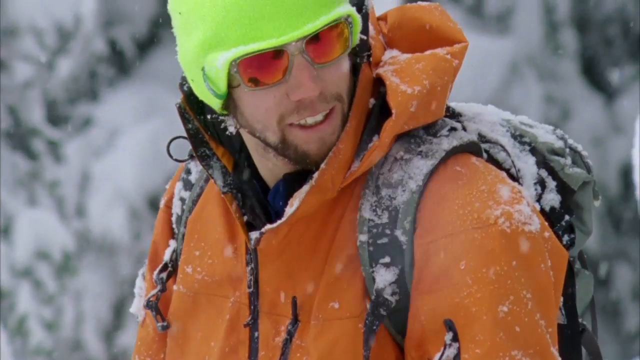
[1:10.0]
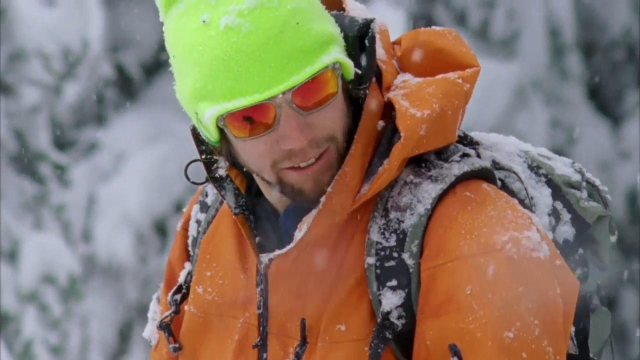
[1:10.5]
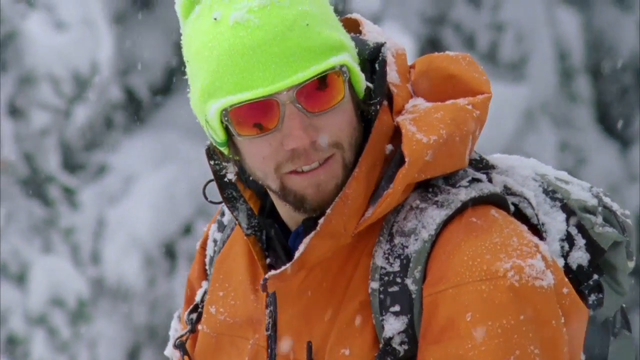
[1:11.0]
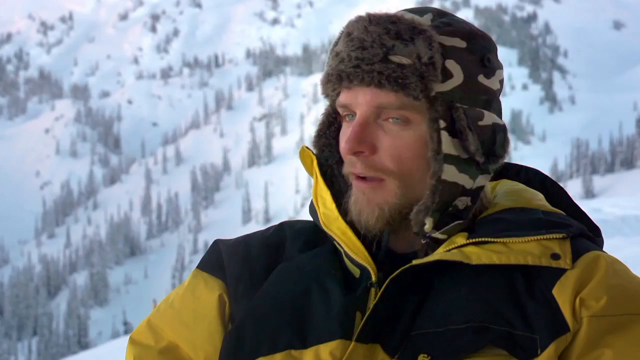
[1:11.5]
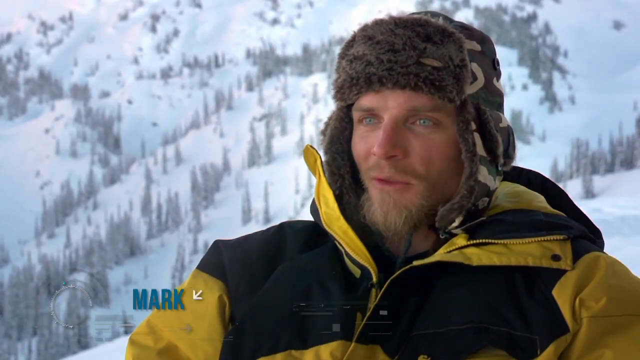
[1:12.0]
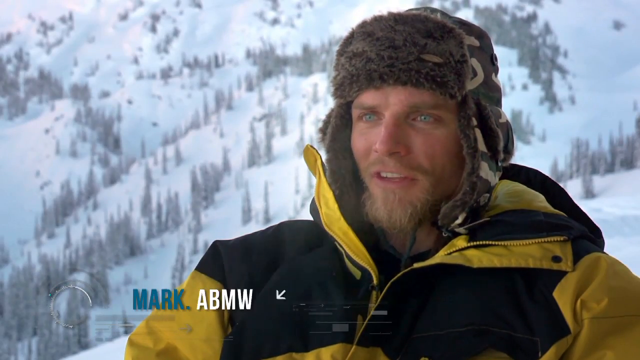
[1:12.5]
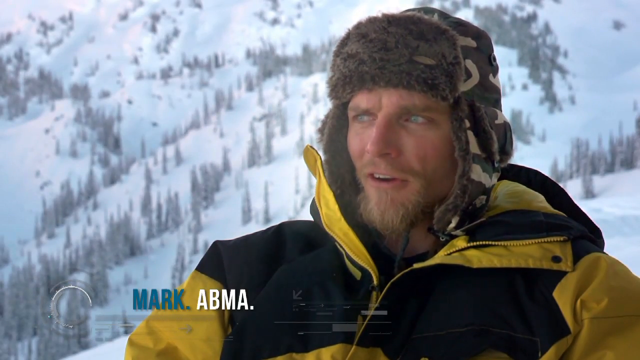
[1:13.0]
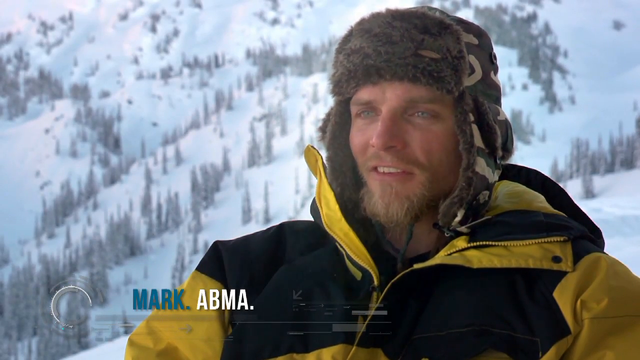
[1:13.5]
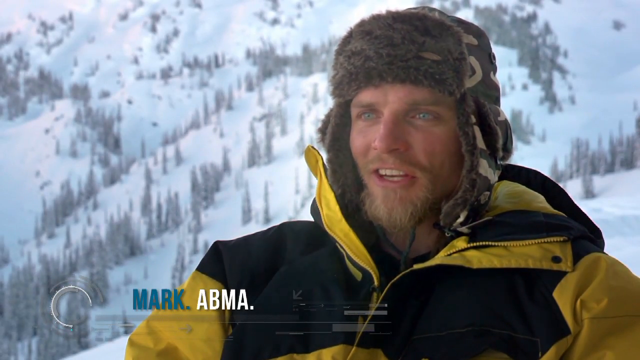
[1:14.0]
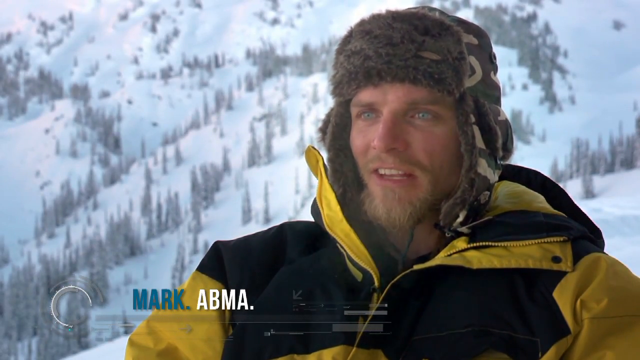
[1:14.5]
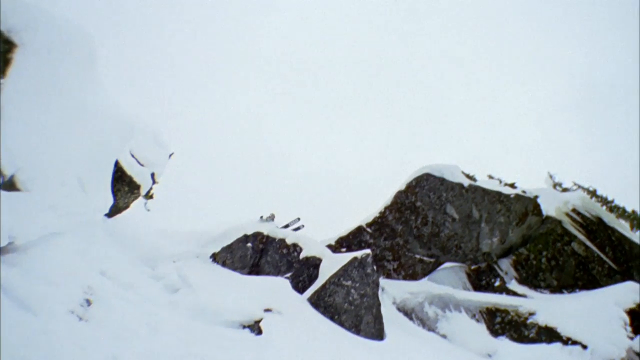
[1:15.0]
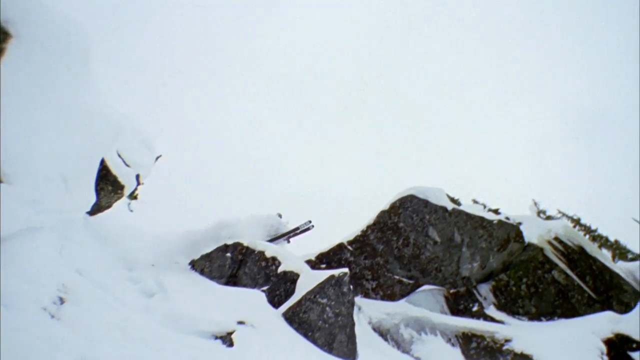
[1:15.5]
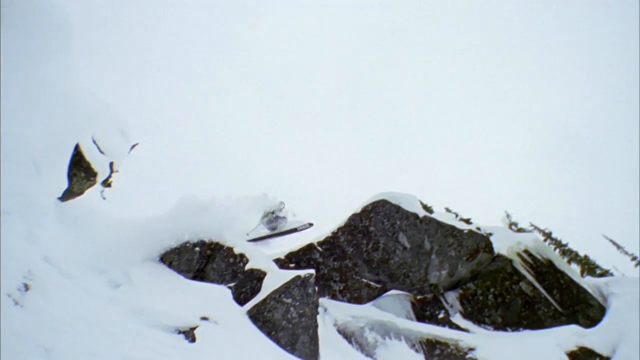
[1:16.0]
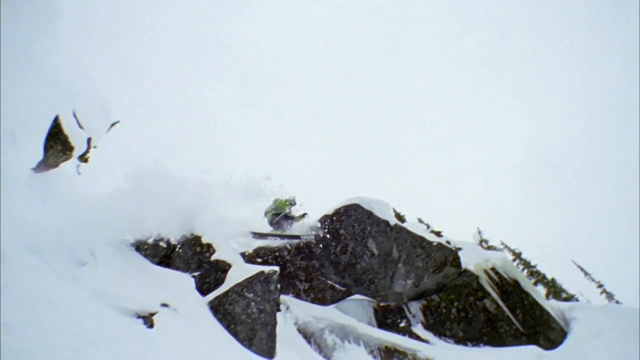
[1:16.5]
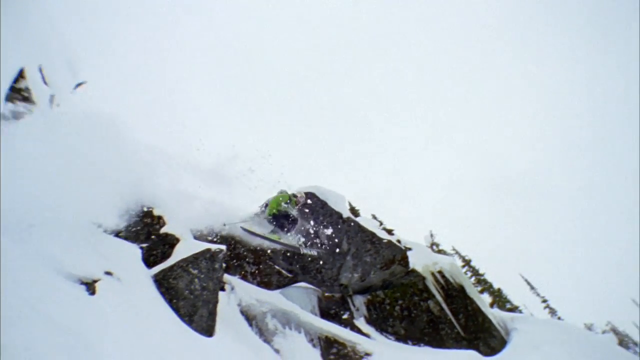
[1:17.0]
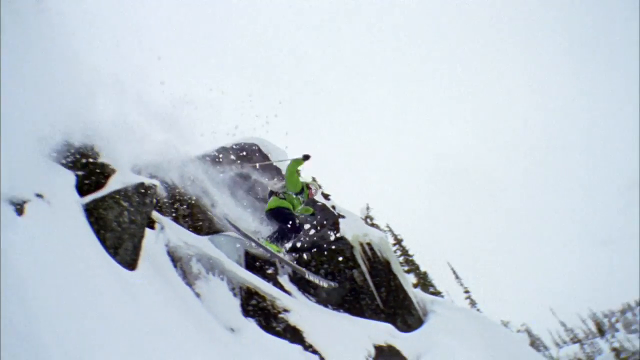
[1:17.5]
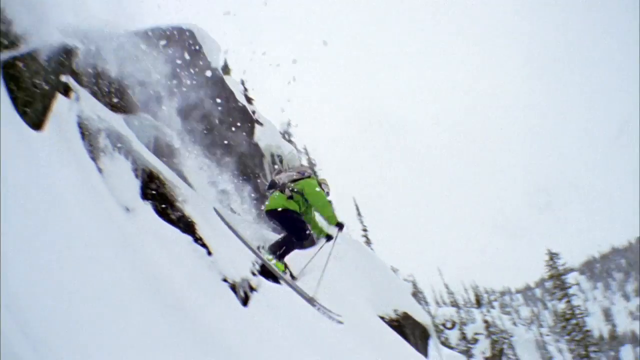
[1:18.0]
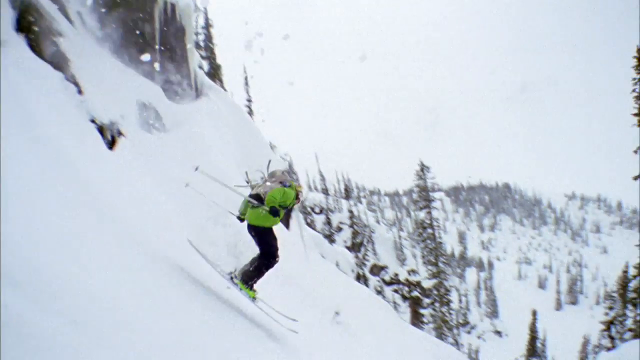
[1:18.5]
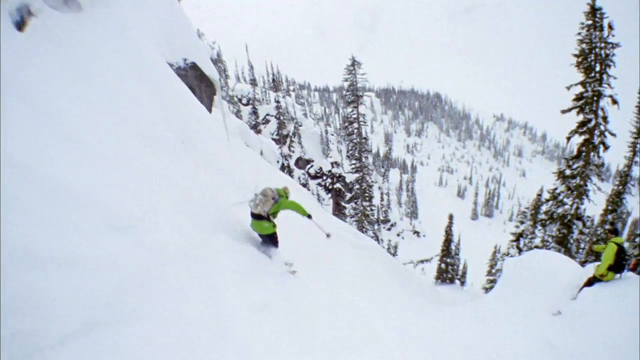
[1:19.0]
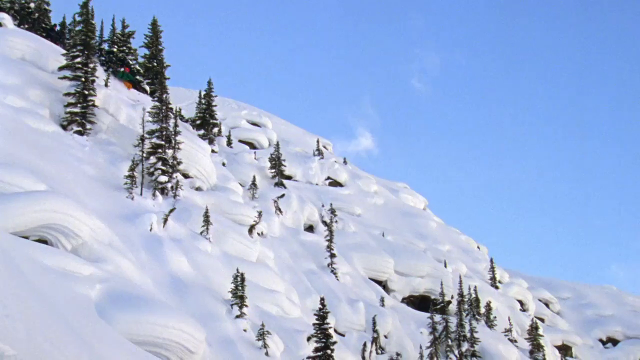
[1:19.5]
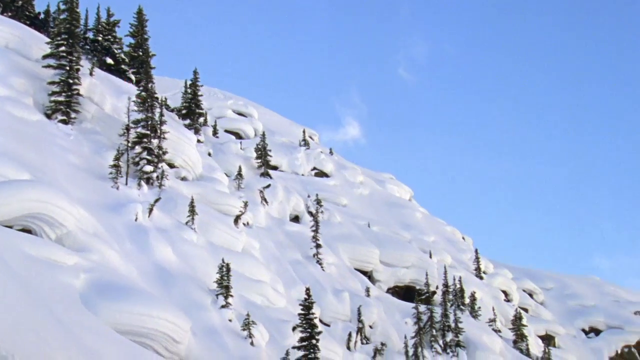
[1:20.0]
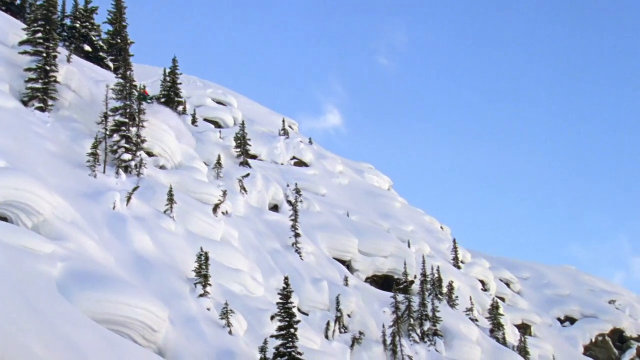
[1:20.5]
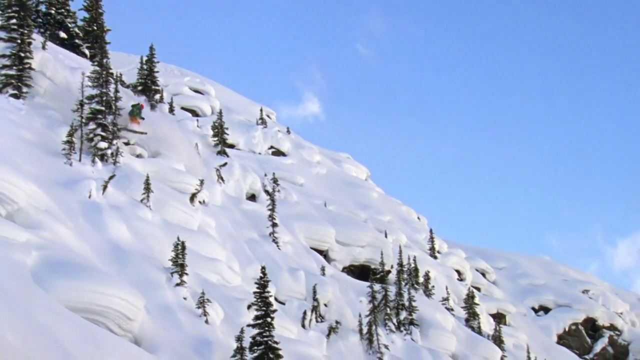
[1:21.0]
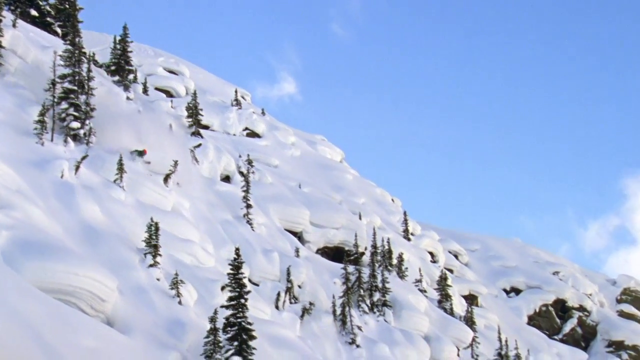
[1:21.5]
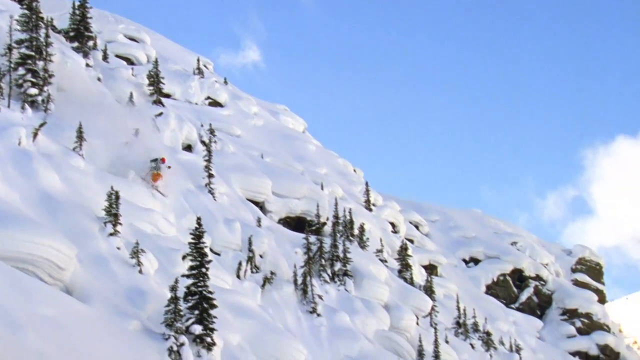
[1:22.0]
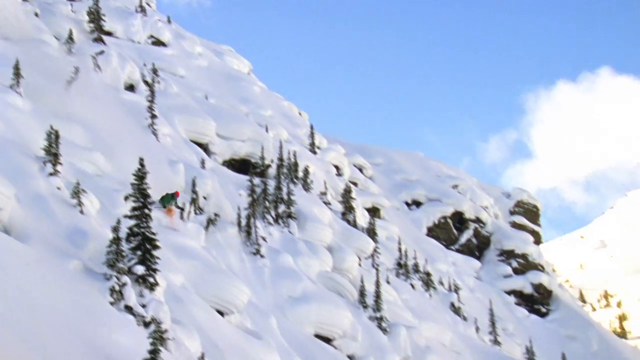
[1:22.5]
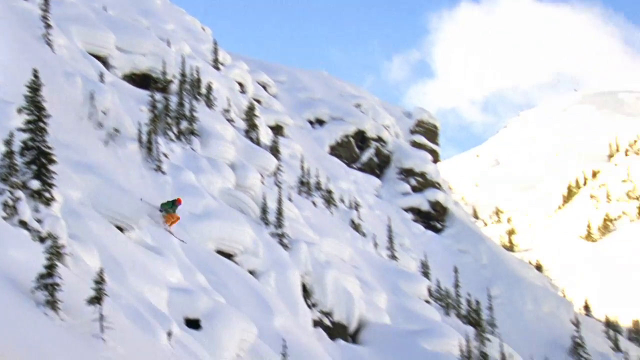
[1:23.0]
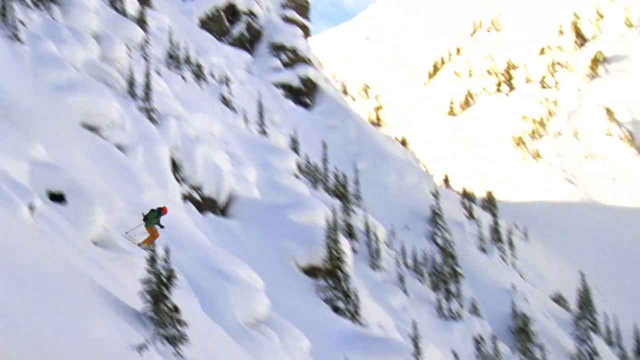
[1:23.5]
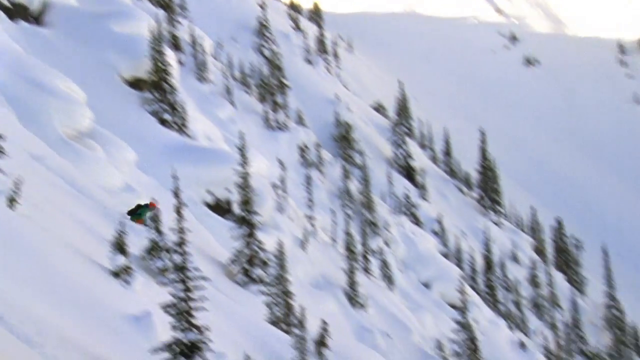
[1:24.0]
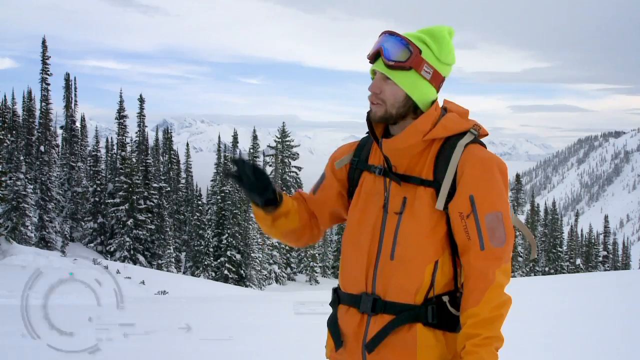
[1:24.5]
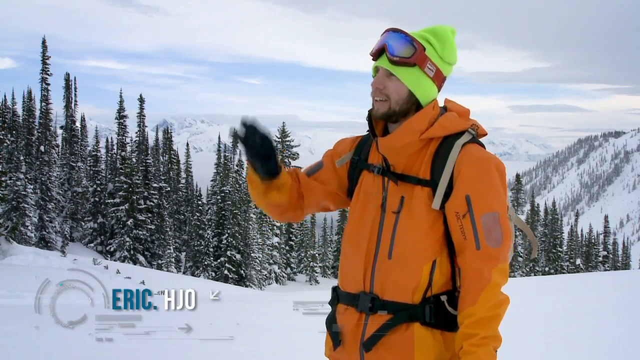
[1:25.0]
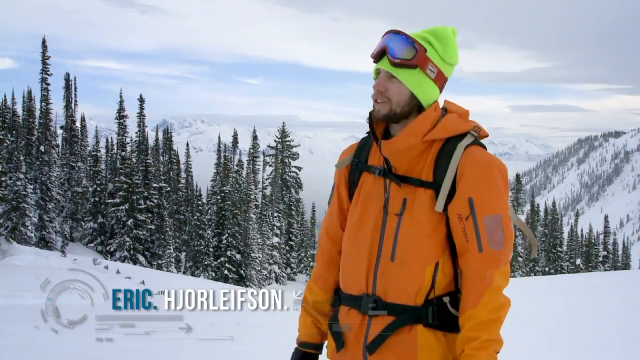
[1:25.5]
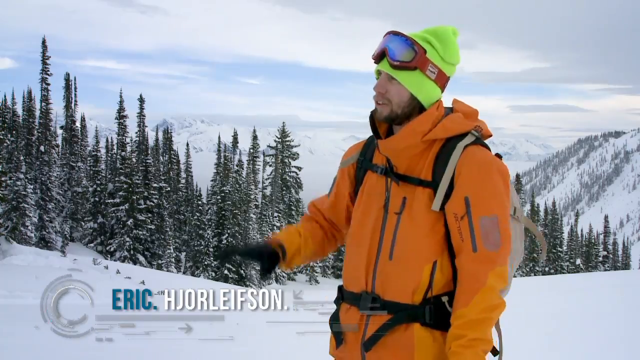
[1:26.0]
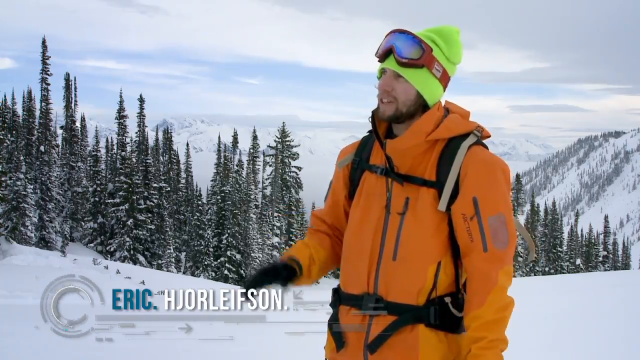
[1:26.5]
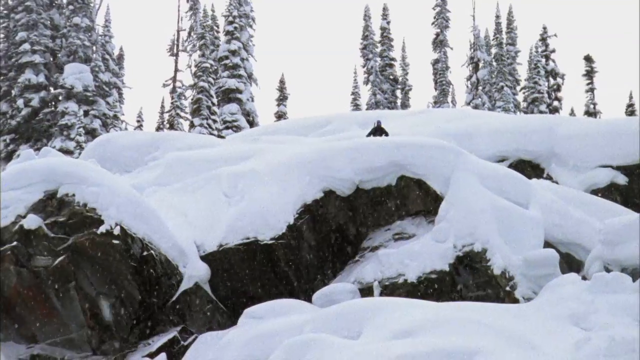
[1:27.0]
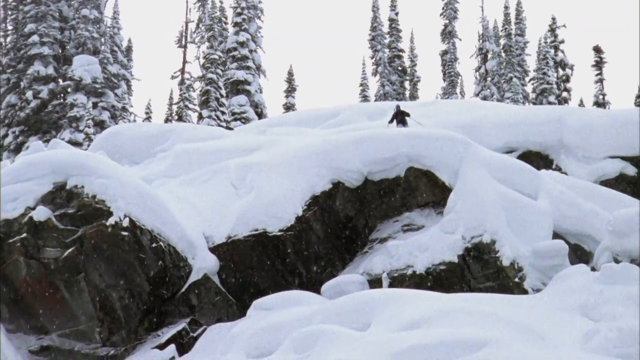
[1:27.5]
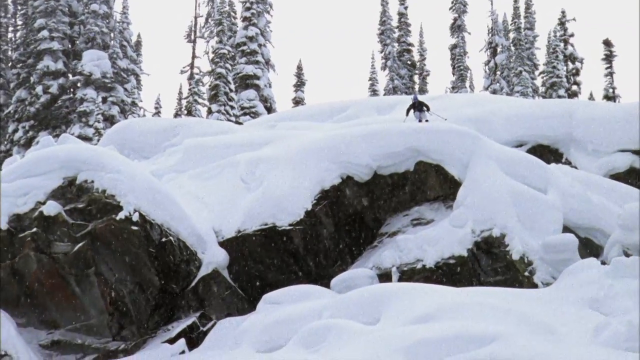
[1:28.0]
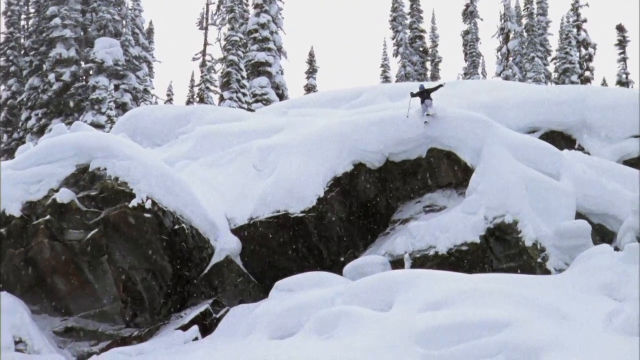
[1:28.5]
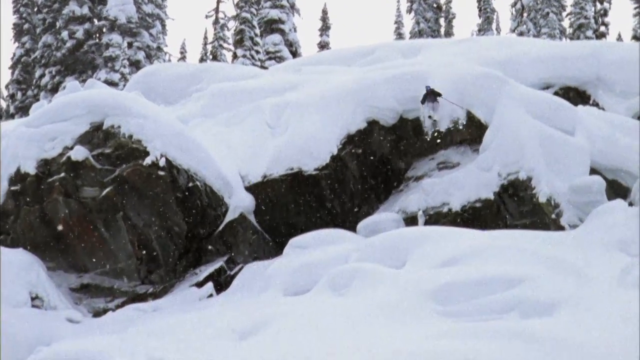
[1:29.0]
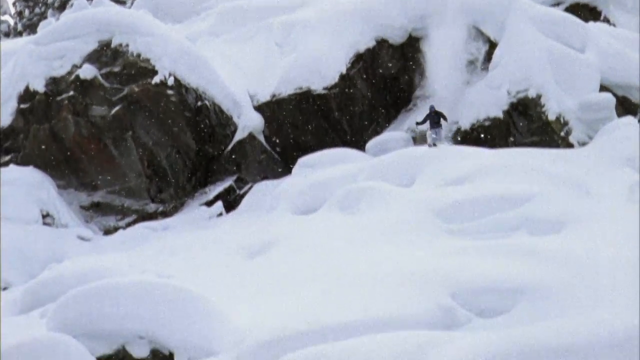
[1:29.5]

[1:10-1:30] The skier looks to his left with his mouth slightly open. The next shot shows a speaking Caucasian man who looks to be in his 30s, with a blonde beard and blue eyes, wearing a yellow and black jacket and a camouflage hat; on the screen his name is given as "Mark Abma", and he is speaking to someone. Then a skier drops down from a cliff, moving from left to right while the camera faces upward toward them, moving both arms in a circular motion as they drop. Next, another skier in red pants, a green jacket and a red beanie goes down a hill from left to right, in slow motion but a little sped up. Then the skier with the orange jacket and the neon green beanie, named Eric Adjor Lifeson, speaks with the camera a little to his left, moving his right arm up and down as if gesturing. Another skier then comes down a slope toward the camera.